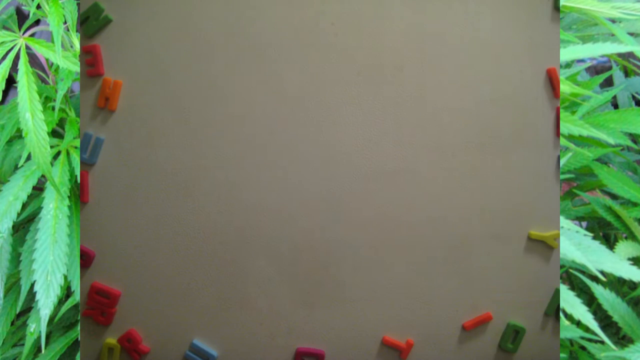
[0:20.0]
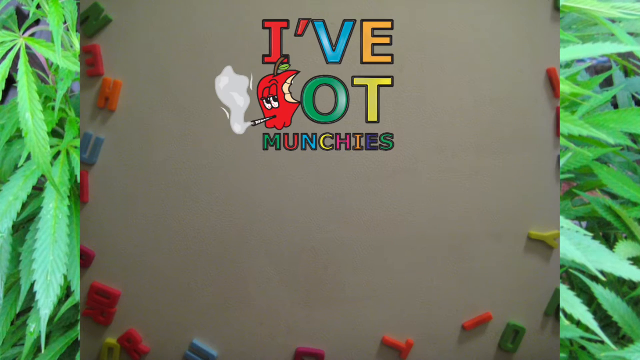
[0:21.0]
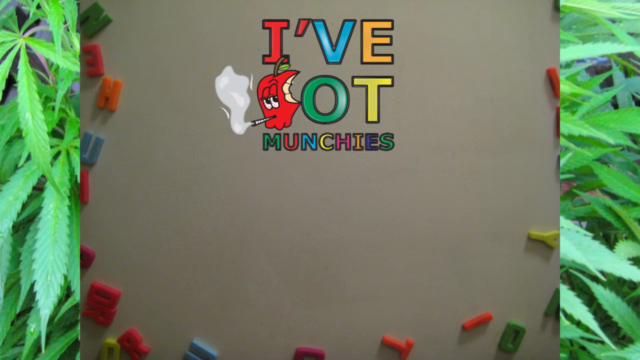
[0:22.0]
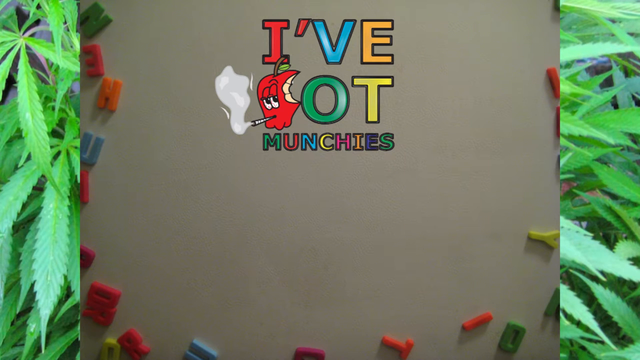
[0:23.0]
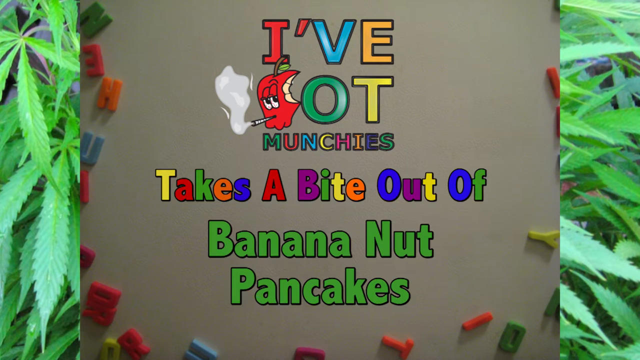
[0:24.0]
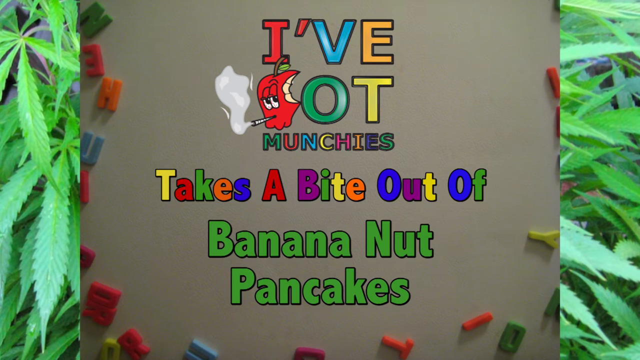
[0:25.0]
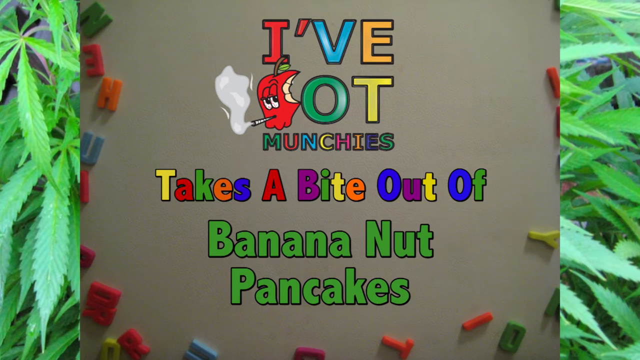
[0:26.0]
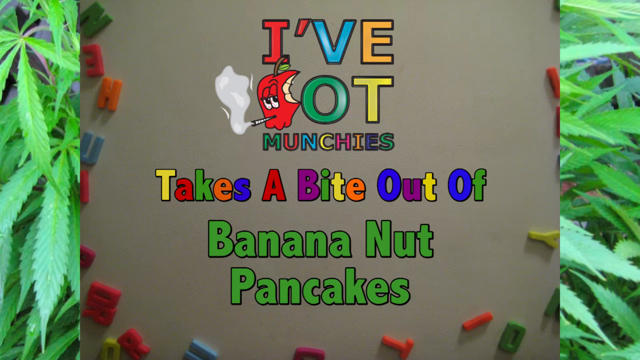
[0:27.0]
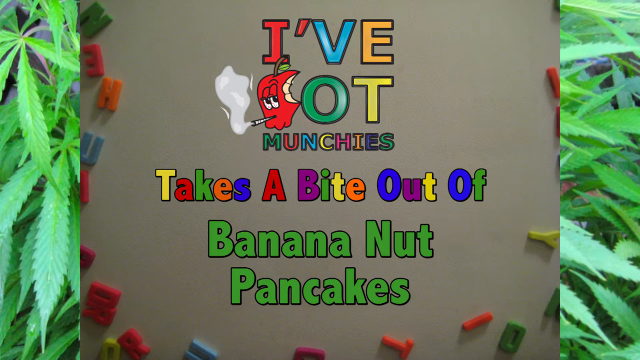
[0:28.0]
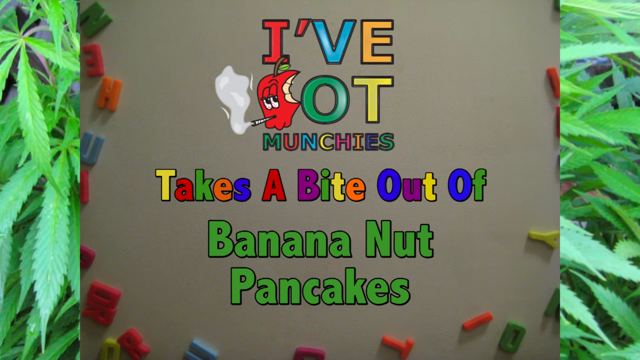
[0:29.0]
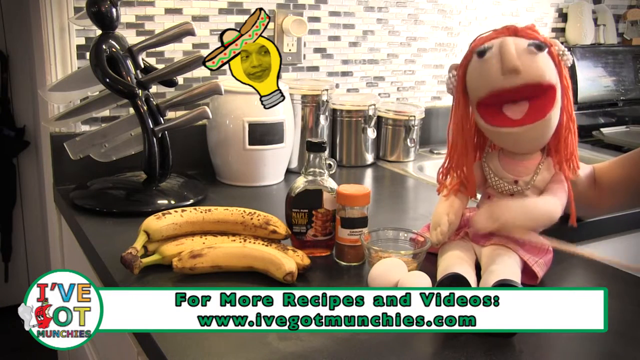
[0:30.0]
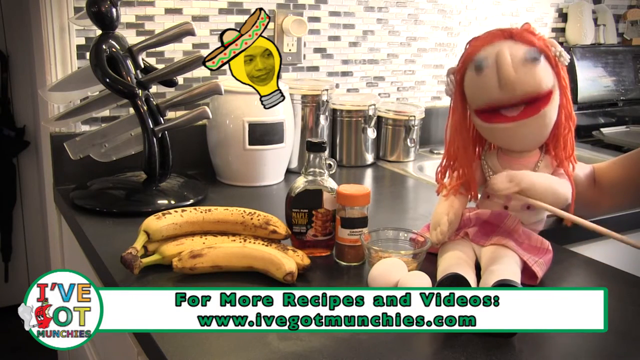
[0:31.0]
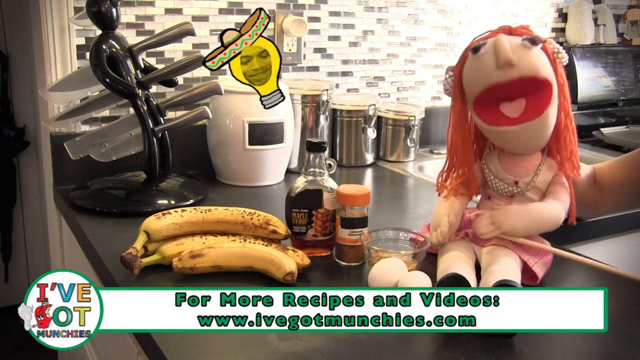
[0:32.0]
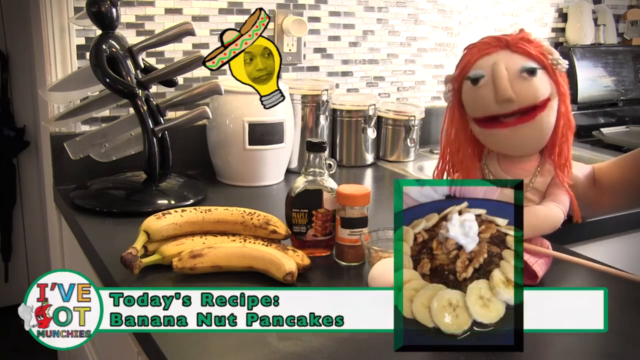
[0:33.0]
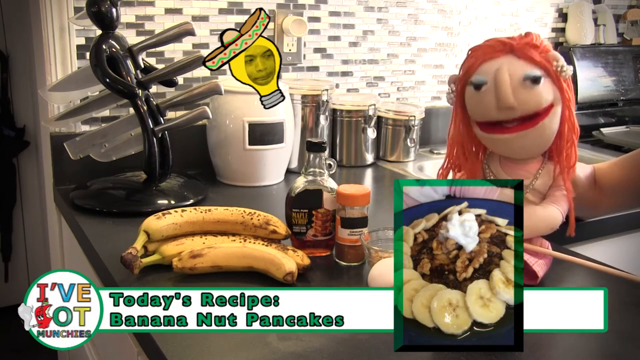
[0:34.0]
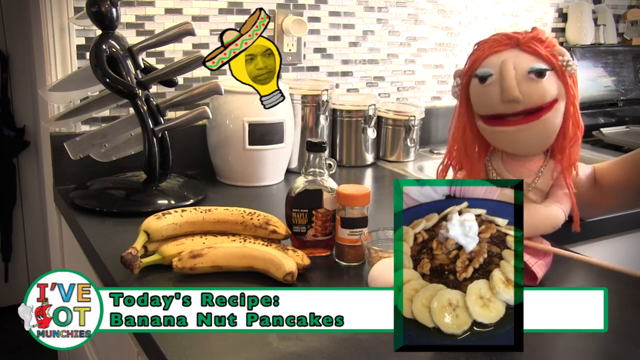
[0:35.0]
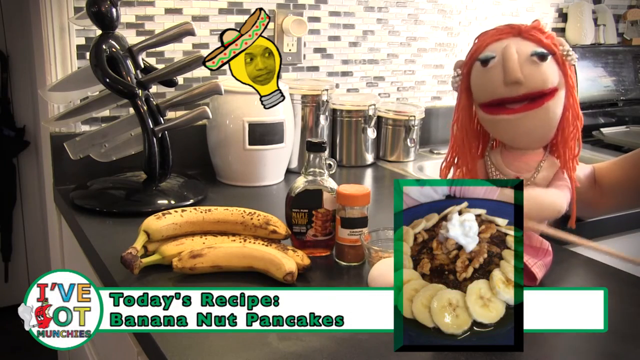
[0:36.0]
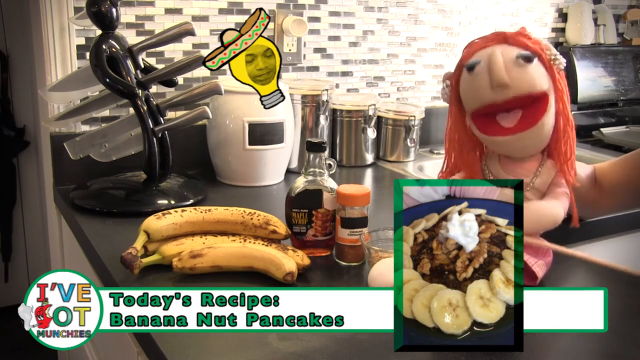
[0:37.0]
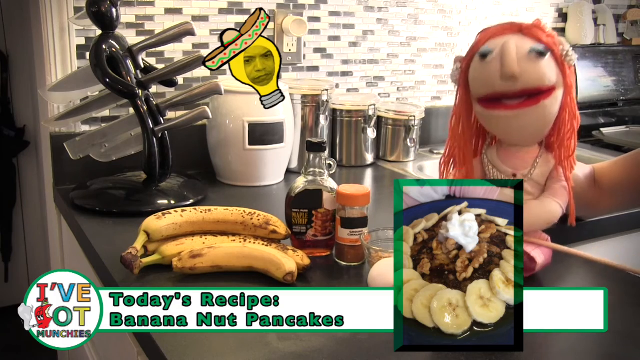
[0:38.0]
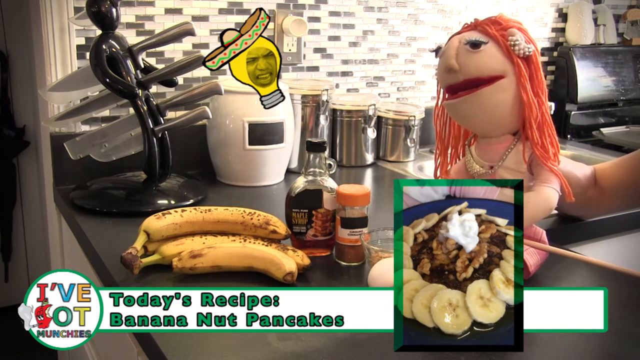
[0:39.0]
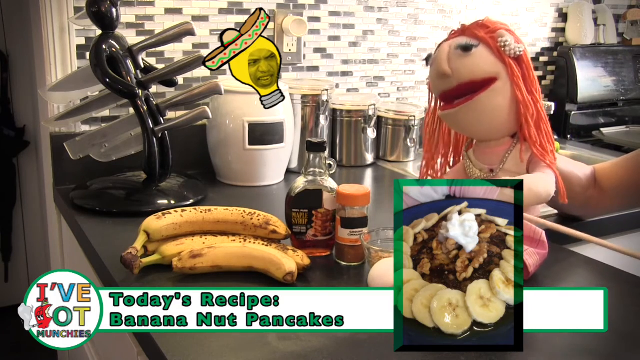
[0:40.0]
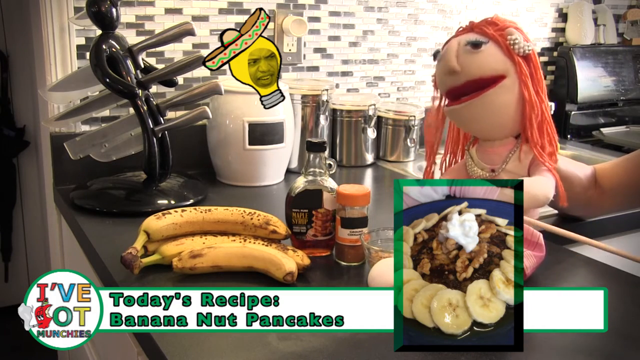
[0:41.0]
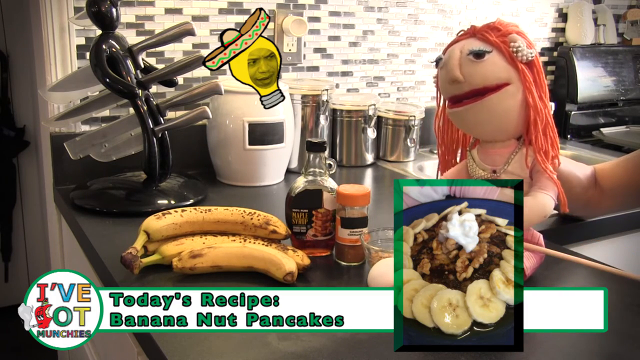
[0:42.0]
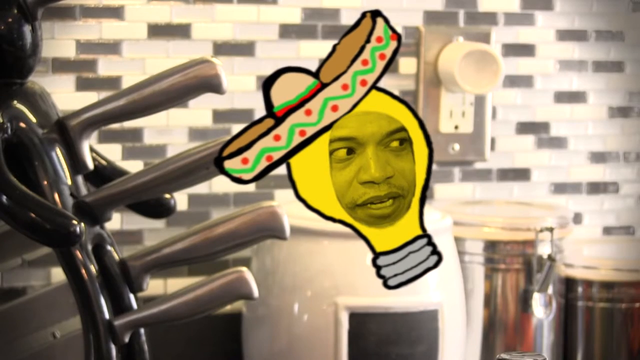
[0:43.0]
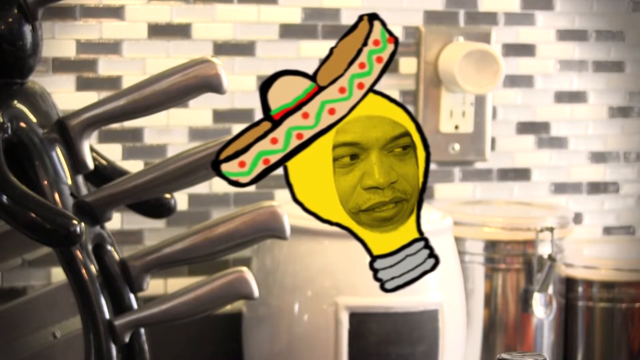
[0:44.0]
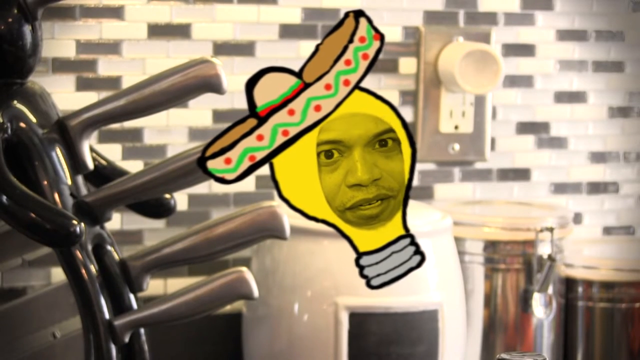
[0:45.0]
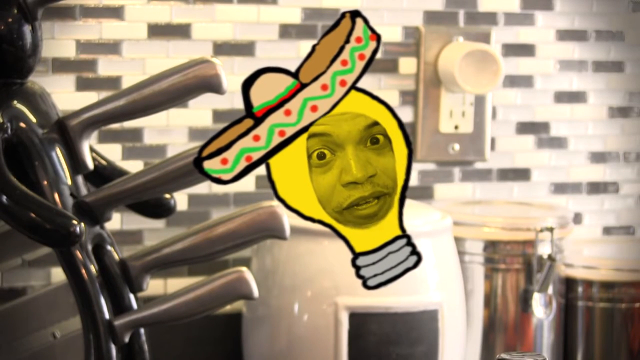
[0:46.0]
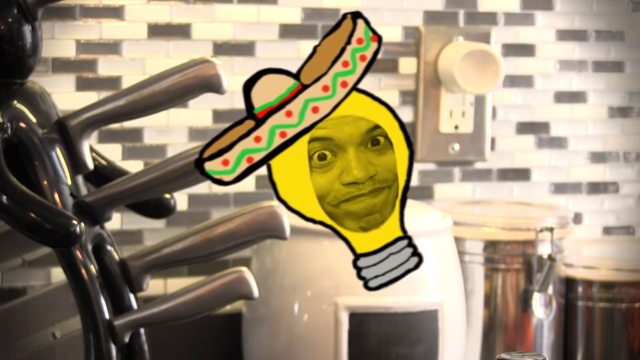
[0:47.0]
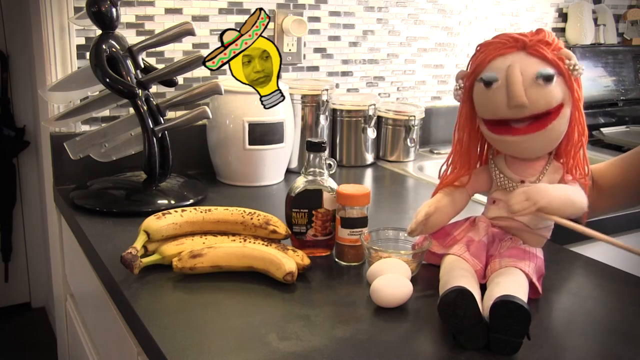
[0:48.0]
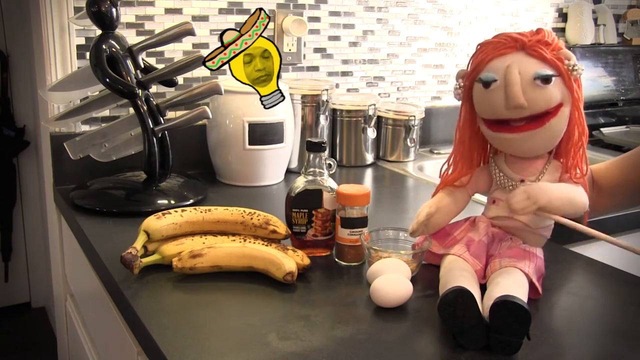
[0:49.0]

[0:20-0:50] The stop animation continues. What look like pot leaves appear on the sides of the screen, and a logo pops up reading "i've got munchies", with a bitten apple smoking a joint forming the G. It stays on the screen for a while. At the bottom, text in rainbow colours reads "takes a bite out of banana nut pancakes", with "banana pancakes" in green text; it looks like a title screen. A puppet sits on the counter, apparently next to a bottle of maple syrup, maybe some oil, and possibly bananas. Text at the bottom reads "for more recipes and videos visit i've got the munchies.com". The puppet has blonde hair and a stick, and someone's hand is visible behind it, controlling the puppet and making it talk. A picture of the final product pops up at the bottom, and the puppet talks. A little white ball-like clump with someone's face in it appears and looks like it is saying something, as if it has an idea. The scene returns to the puppet on the counter, with all the ingredients laid out.